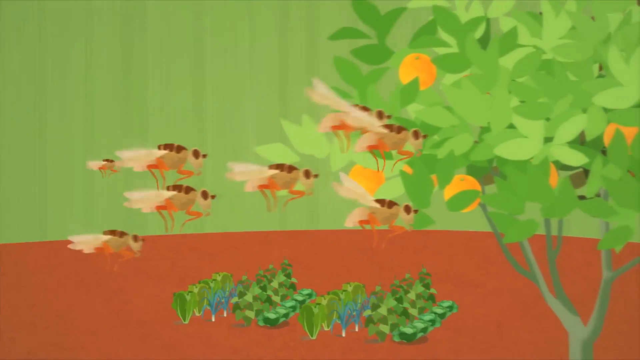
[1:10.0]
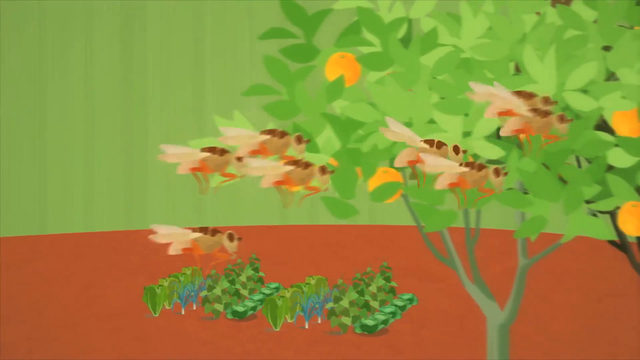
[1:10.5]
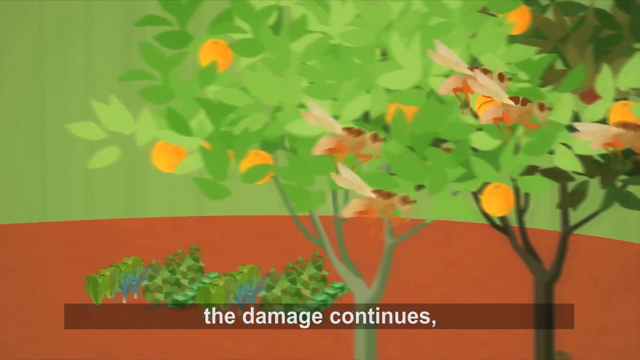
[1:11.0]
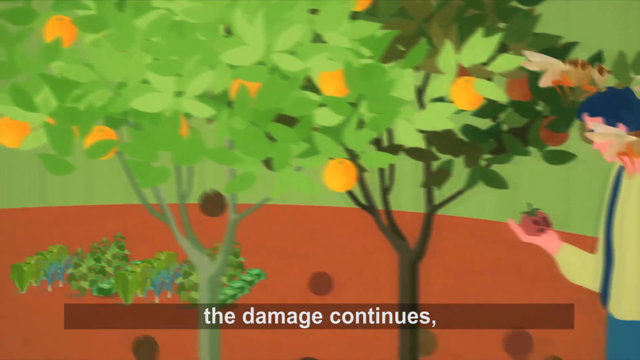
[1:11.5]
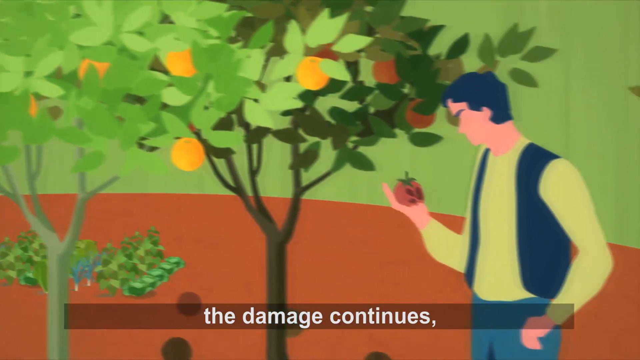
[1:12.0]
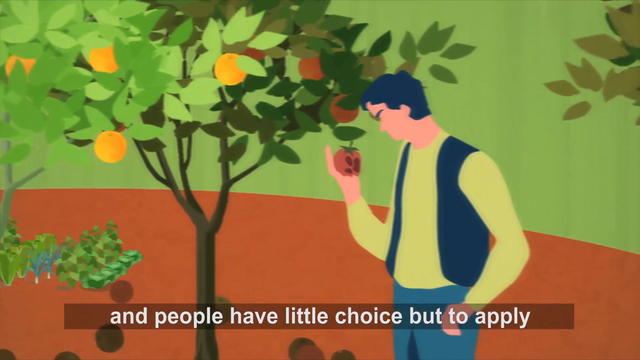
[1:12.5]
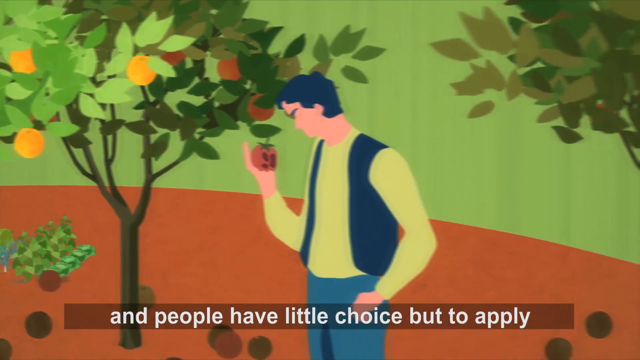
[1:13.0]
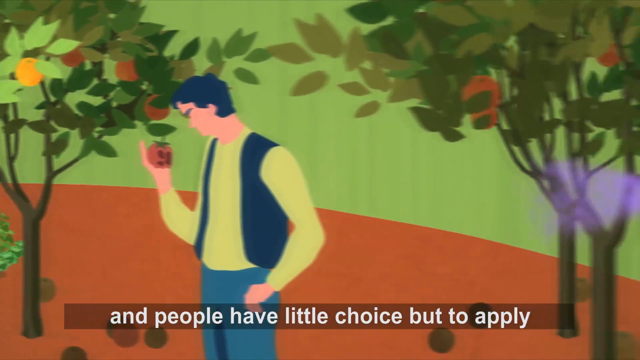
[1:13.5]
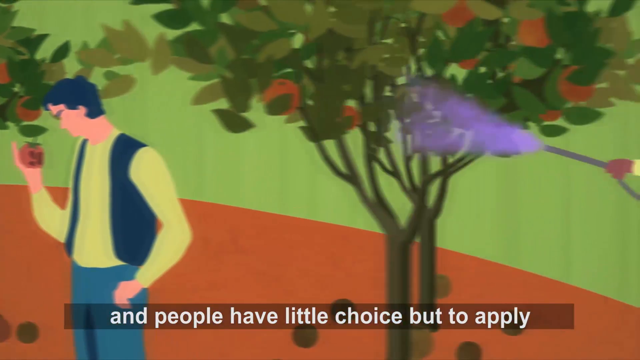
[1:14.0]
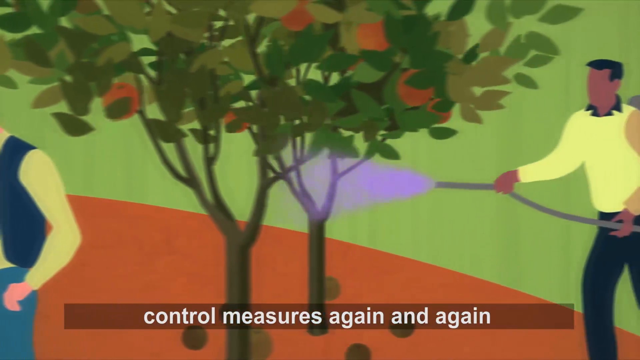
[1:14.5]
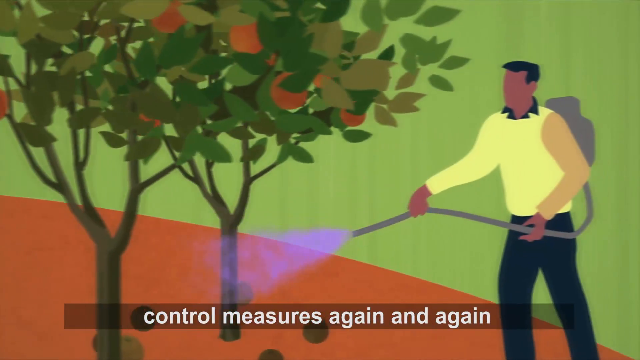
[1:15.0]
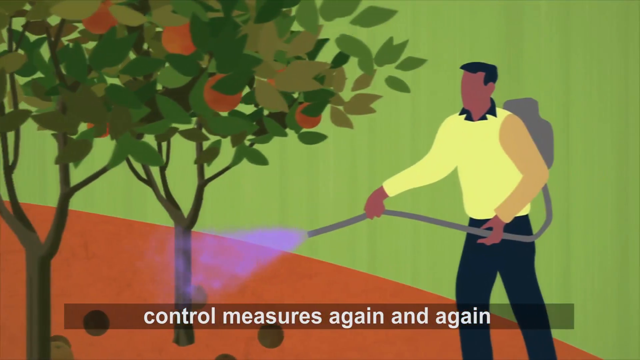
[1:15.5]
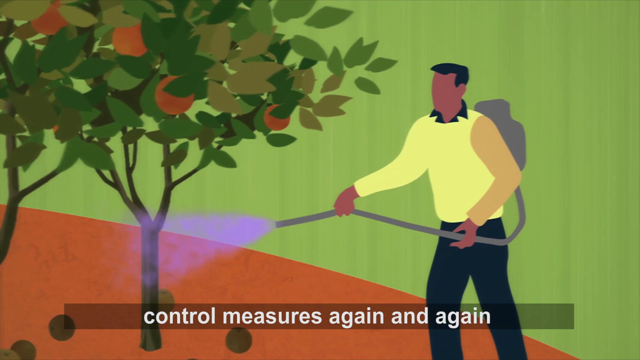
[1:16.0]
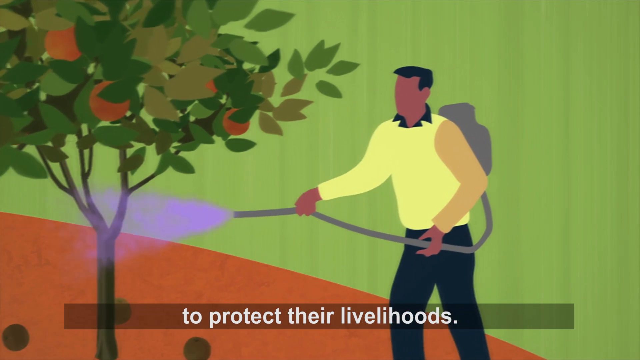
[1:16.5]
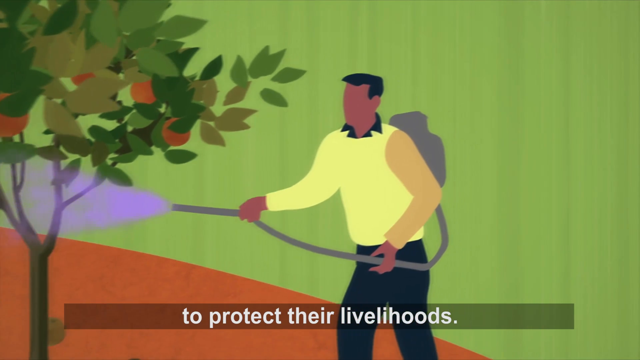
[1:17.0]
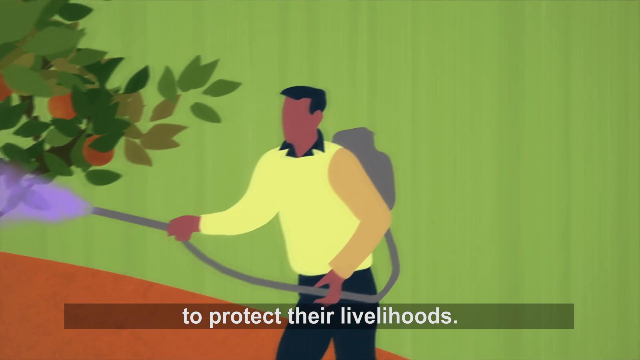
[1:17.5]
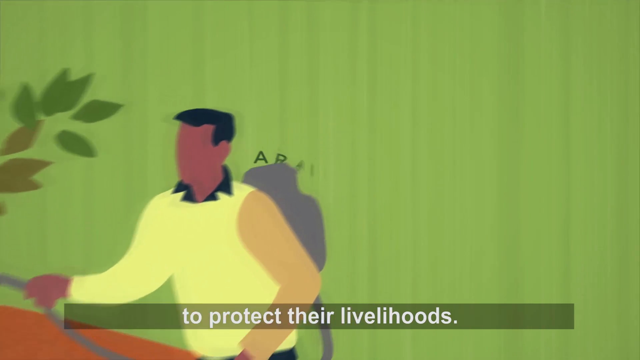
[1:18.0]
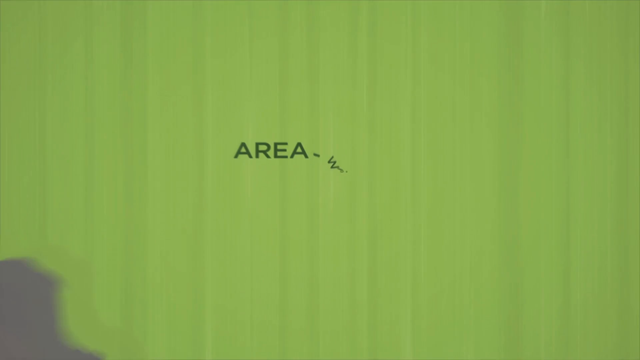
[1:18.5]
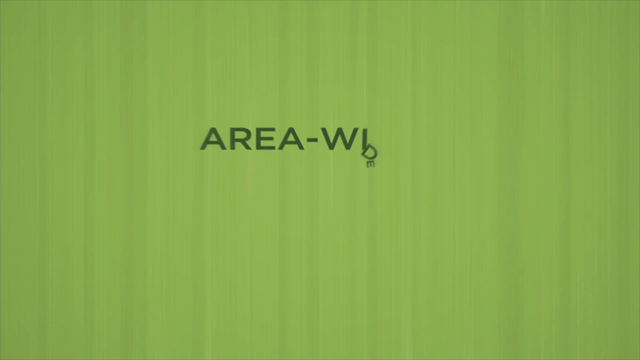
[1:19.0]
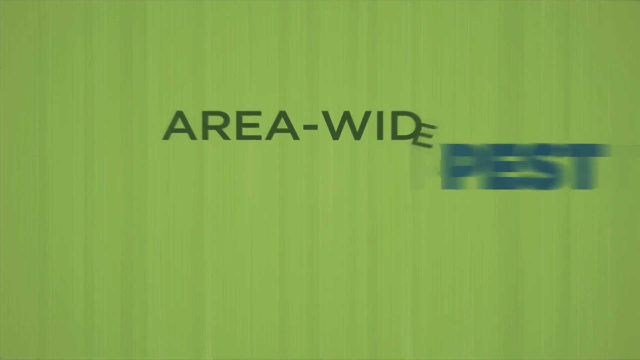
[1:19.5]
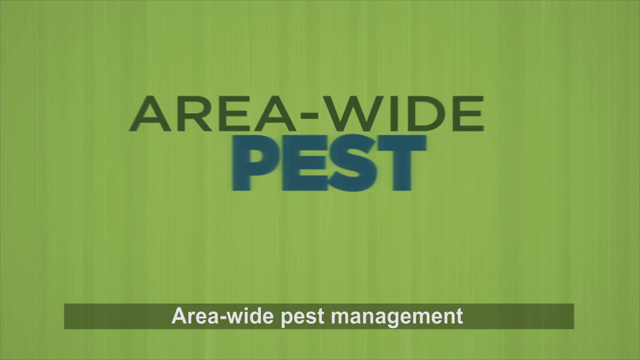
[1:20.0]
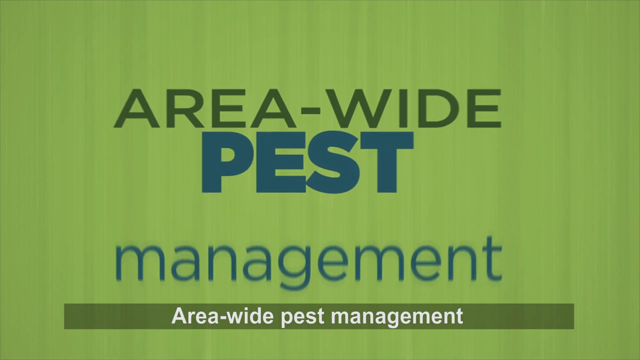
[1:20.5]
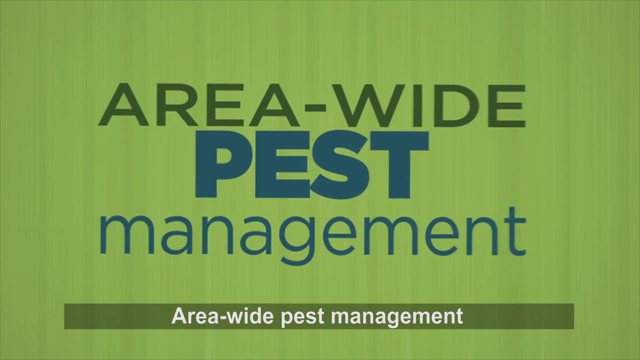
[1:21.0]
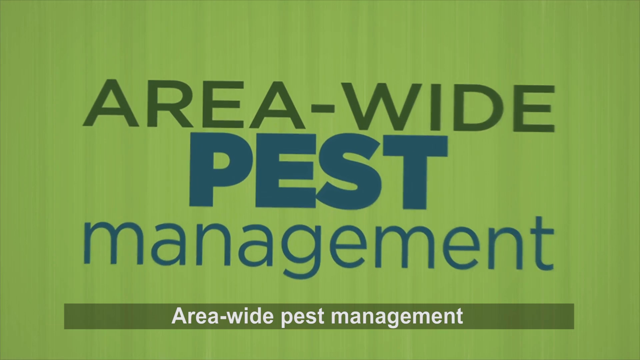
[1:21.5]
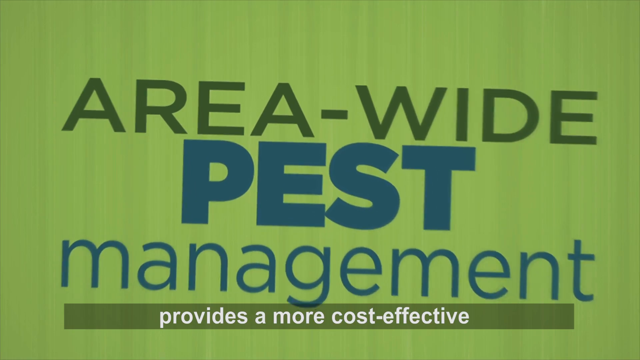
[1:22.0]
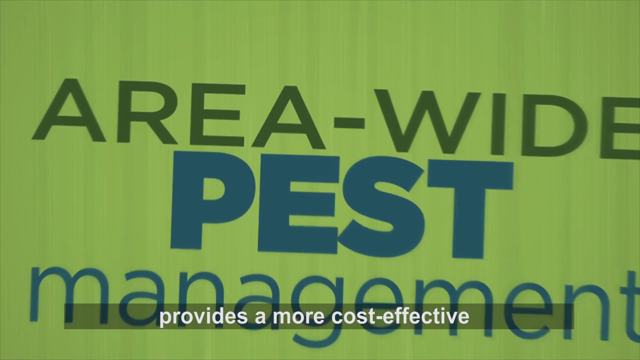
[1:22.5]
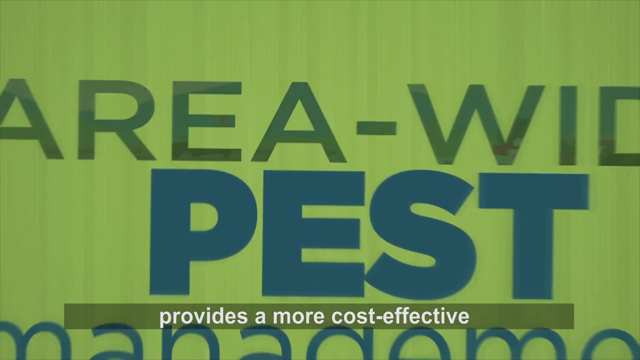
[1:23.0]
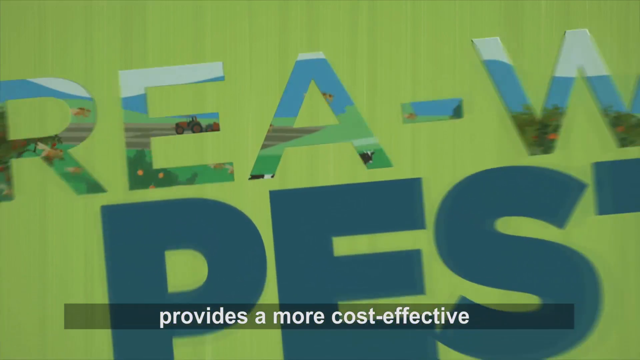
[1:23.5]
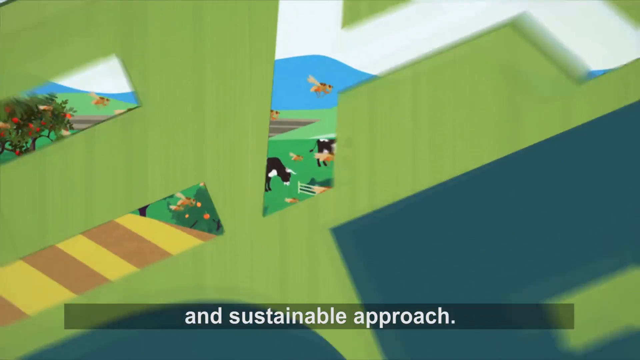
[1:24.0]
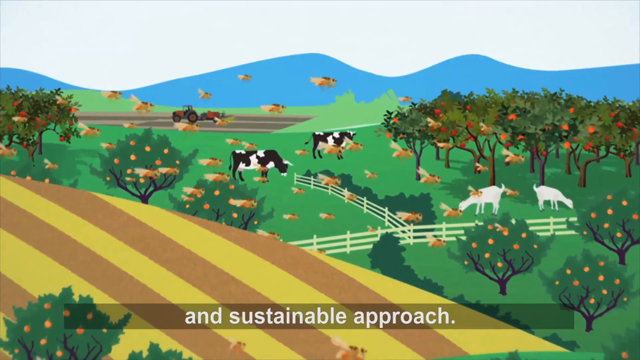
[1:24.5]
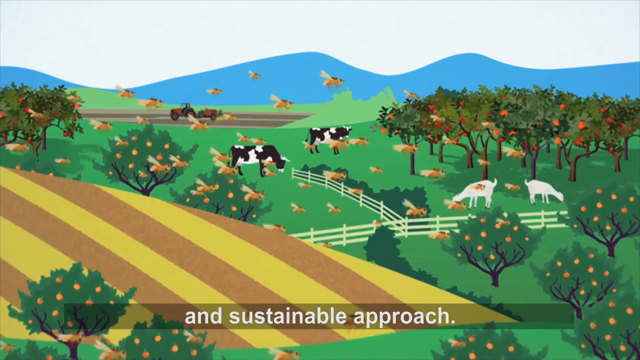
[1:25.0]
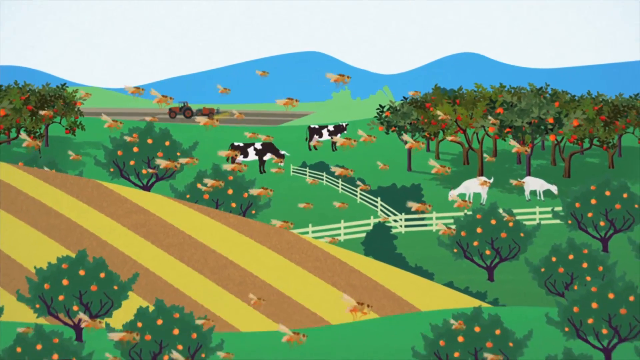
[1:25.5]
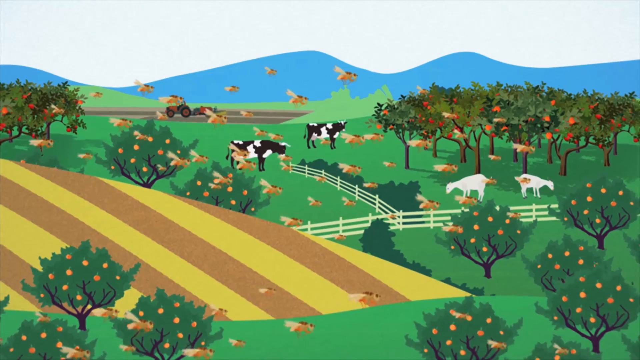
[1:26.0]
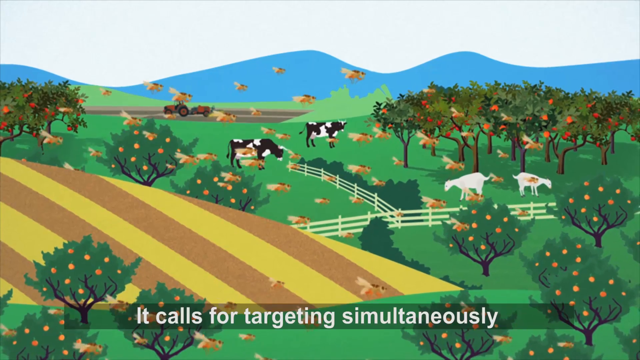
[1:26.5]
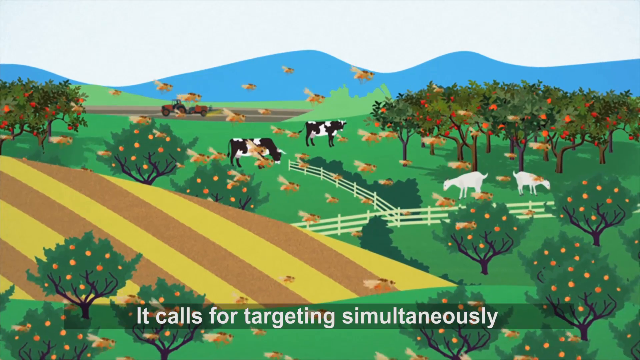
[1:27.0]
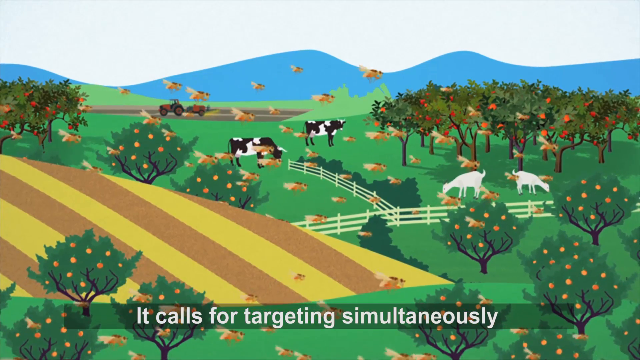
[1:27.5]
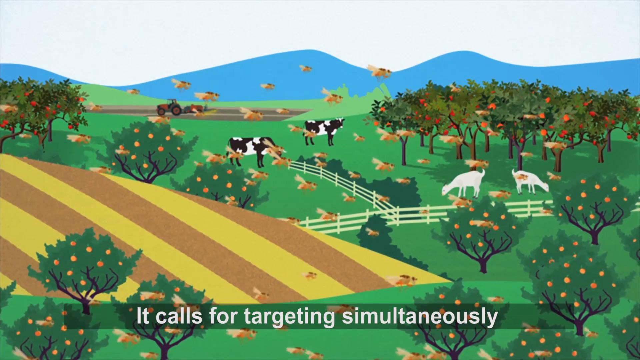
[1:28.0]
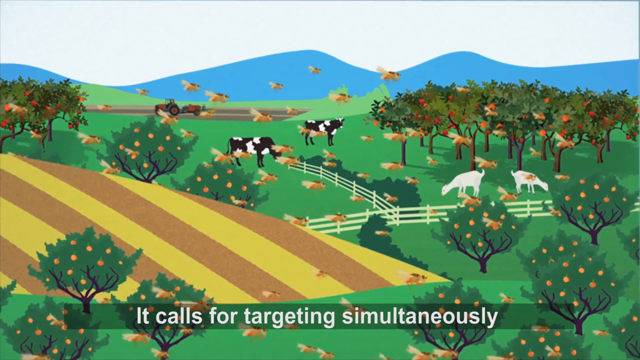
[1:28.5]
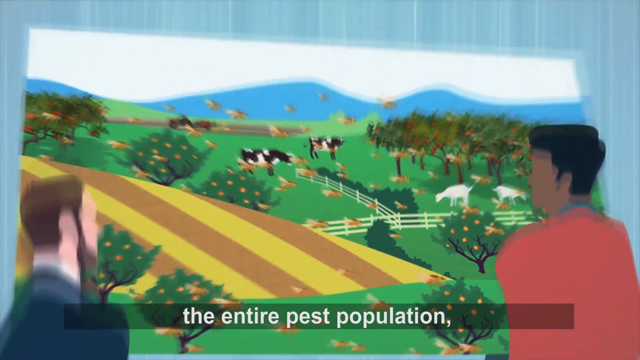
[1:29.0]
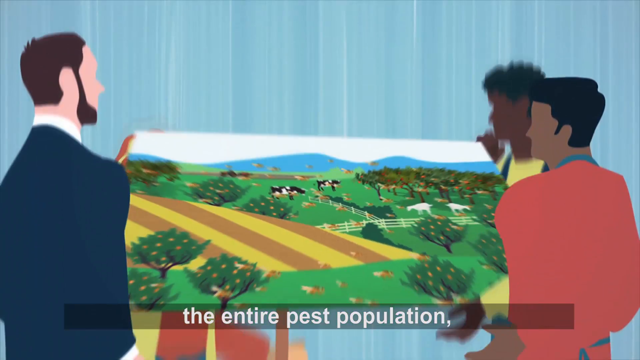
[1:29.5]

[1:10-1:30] A series of bugs and mosquitoes flies across the screen. There is a healthy tree with ripe fruit that looks like oranges, and then a tree where the fruit looks a little less healthy. A man in blue trousers, a blue waistcoat and a green shirt assesses what looks like a rotten apple in his right hand. As the view pans further across, more trees of the same kind in the same poor condition are being sprayed by a different man with a purple sprayer and a backpack. Panning further across, a green screen appears, and as the view closes in on it, the words "area-wide pest management" appear. The view zooms through those words into a farm scene with plowed fields, white picket fencing, fruit trees in the foreground, a tractor plowing the fields in the background, two cows, two goats and multiple bugs, apparently mosquitoes; the scene seems to represent quite a healthy ecosystem. The final scene is a group of four people in a meeting room. The man at front left has a beard and looks like he is wearing a suit, while the other three are more casually dressed: what looks like a woman at back left has something in her hair, a man at back right looks like he has a green shirt and braces on, and a man at front right wears a red shirt with a blue collar.